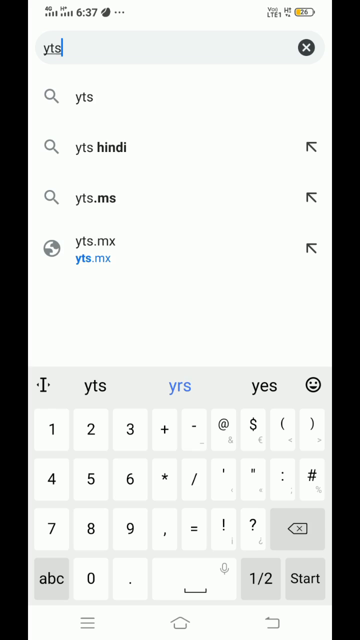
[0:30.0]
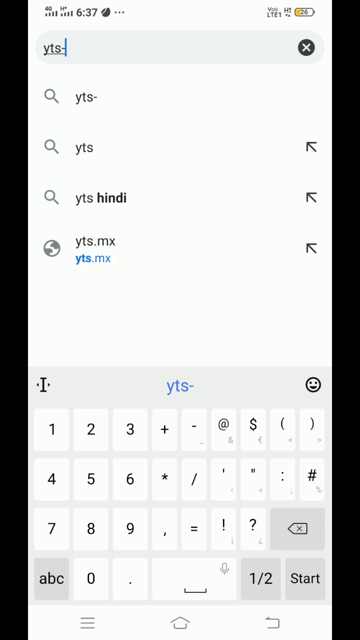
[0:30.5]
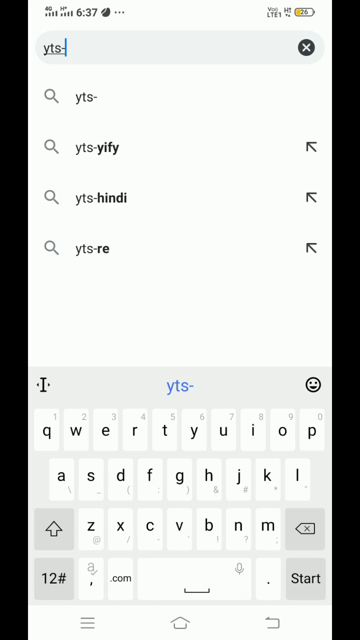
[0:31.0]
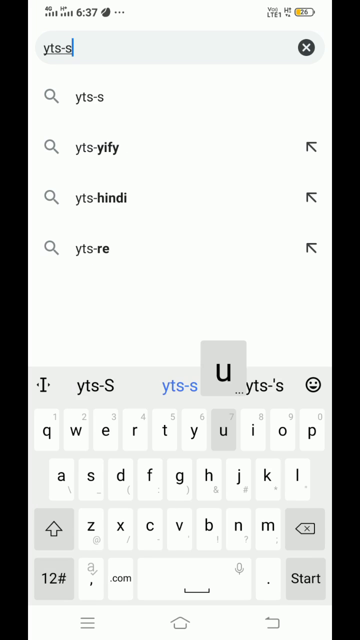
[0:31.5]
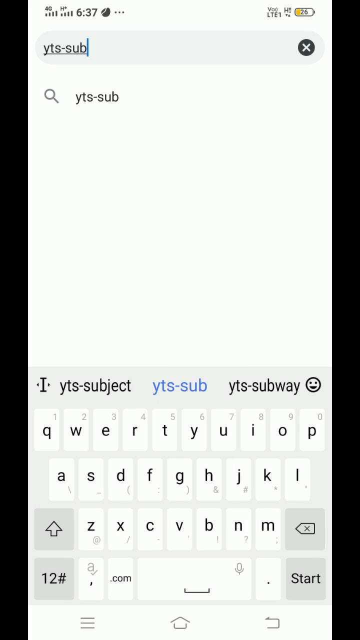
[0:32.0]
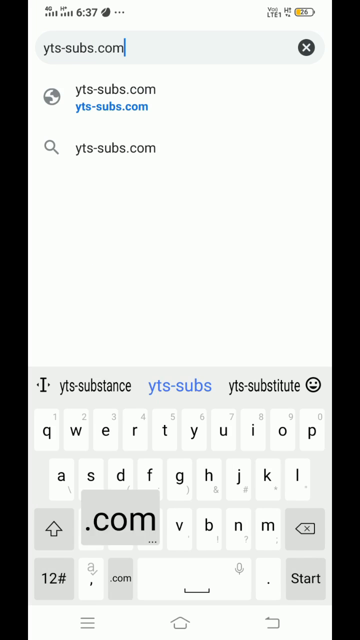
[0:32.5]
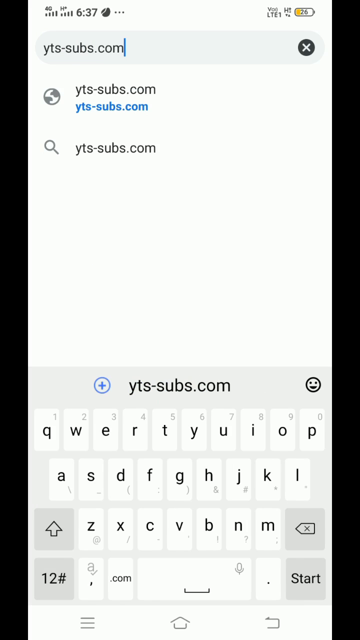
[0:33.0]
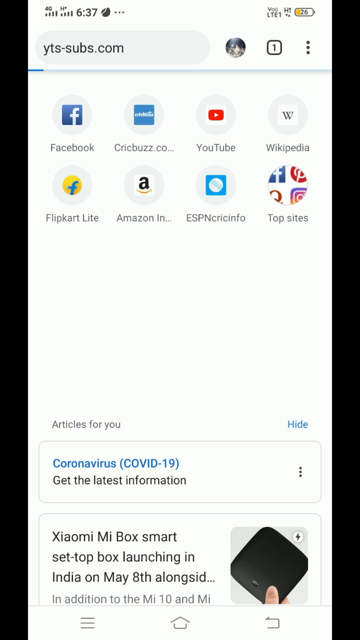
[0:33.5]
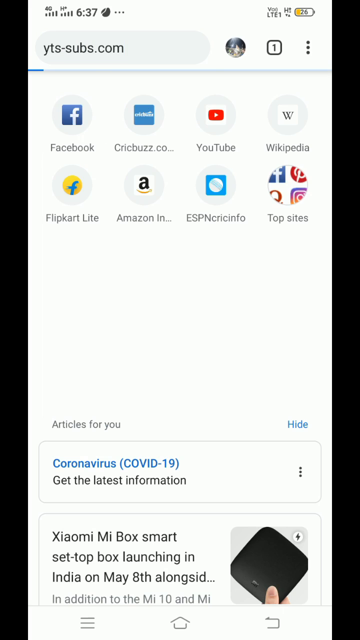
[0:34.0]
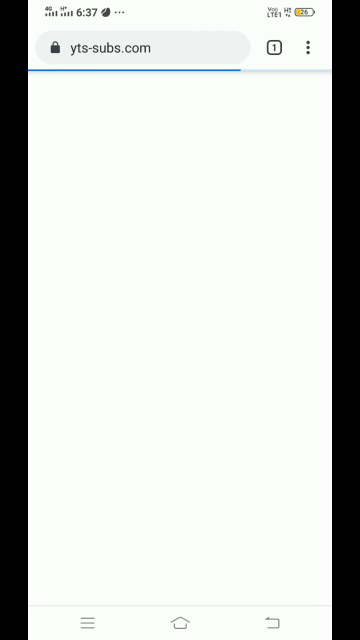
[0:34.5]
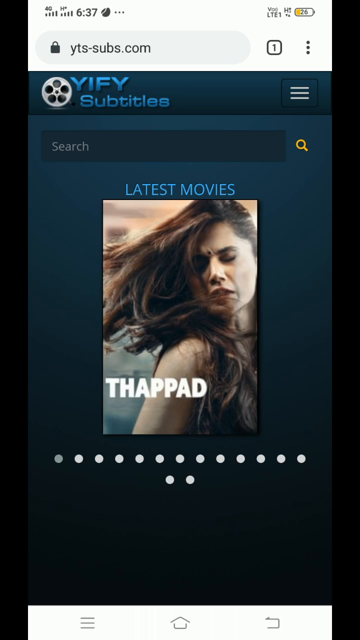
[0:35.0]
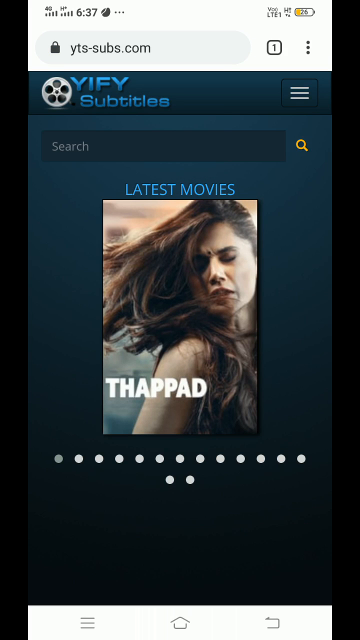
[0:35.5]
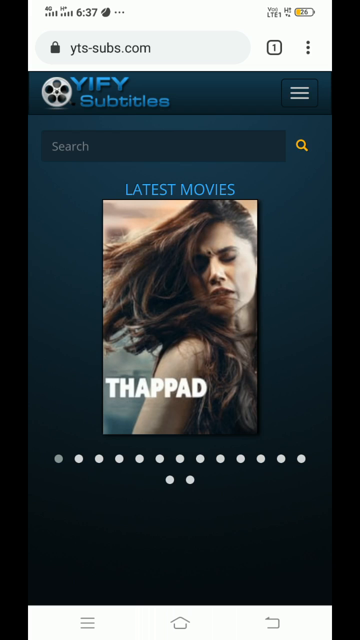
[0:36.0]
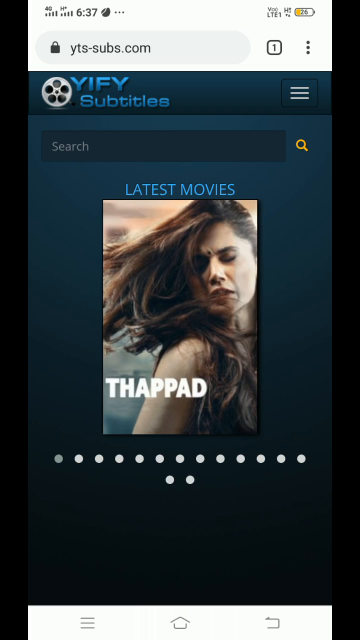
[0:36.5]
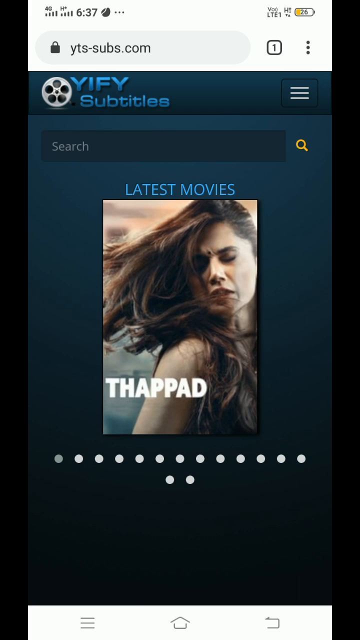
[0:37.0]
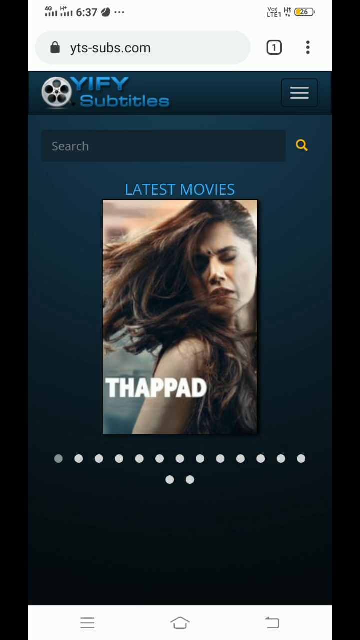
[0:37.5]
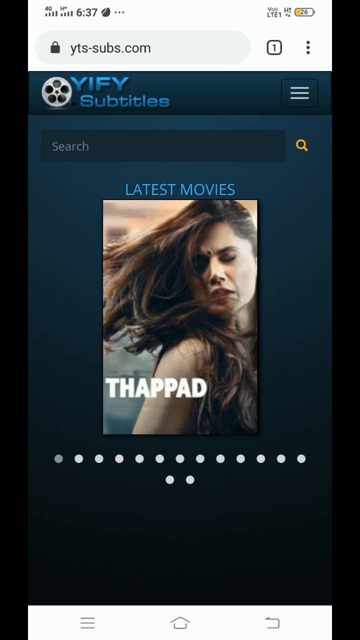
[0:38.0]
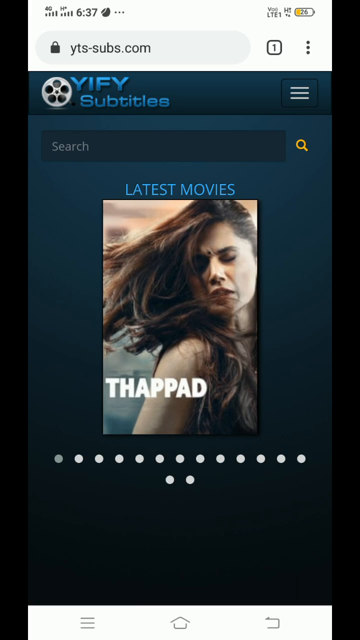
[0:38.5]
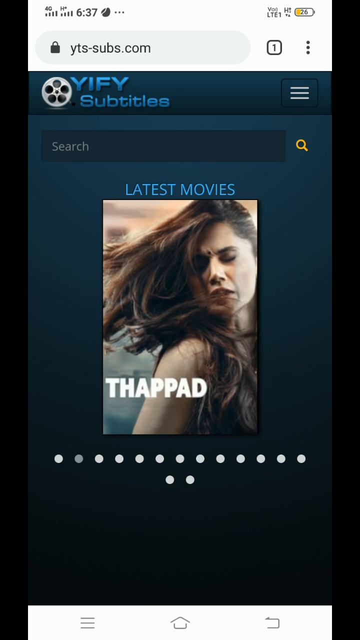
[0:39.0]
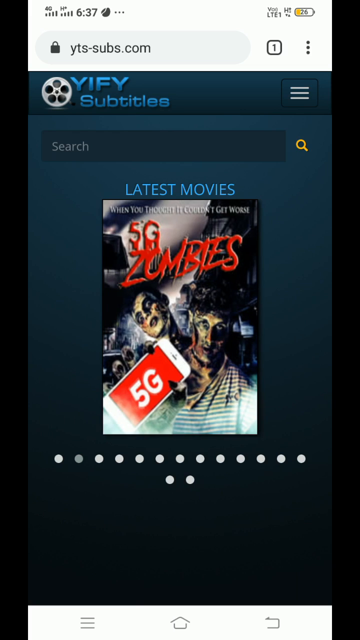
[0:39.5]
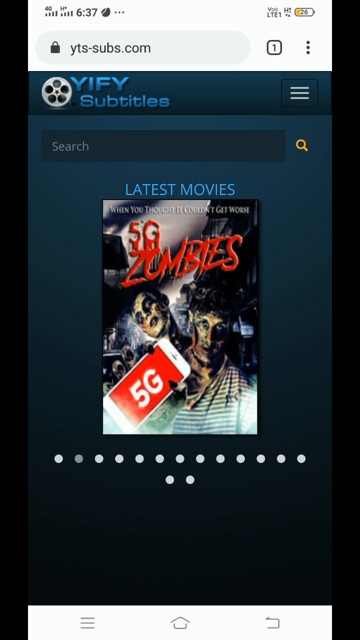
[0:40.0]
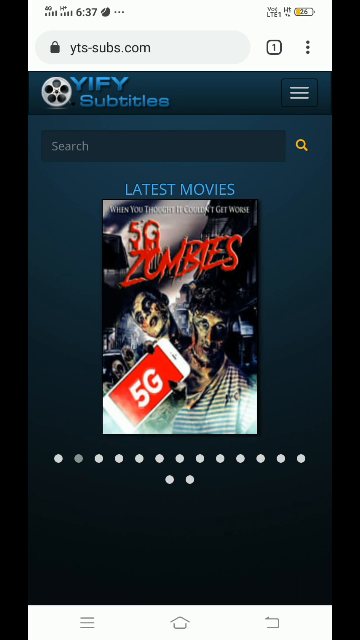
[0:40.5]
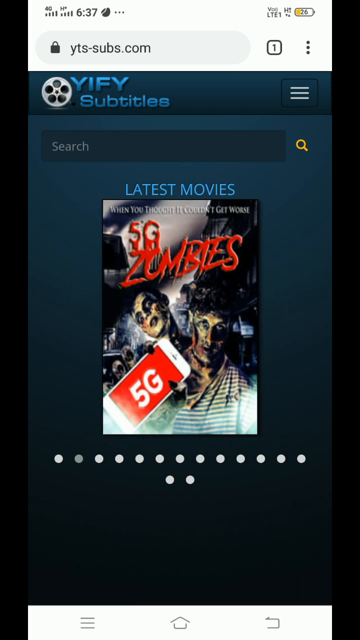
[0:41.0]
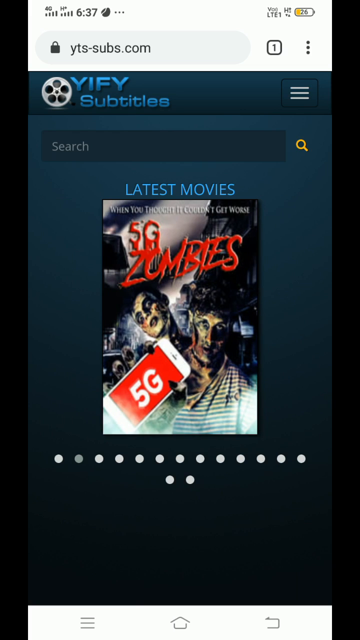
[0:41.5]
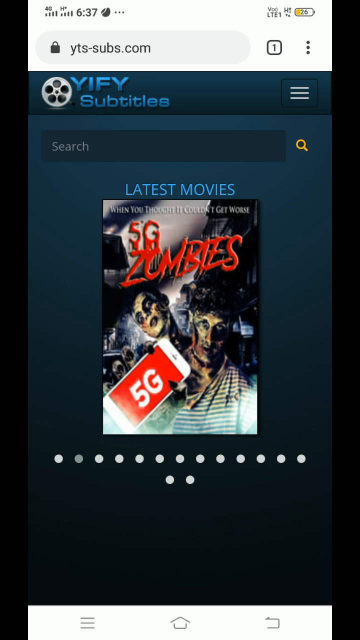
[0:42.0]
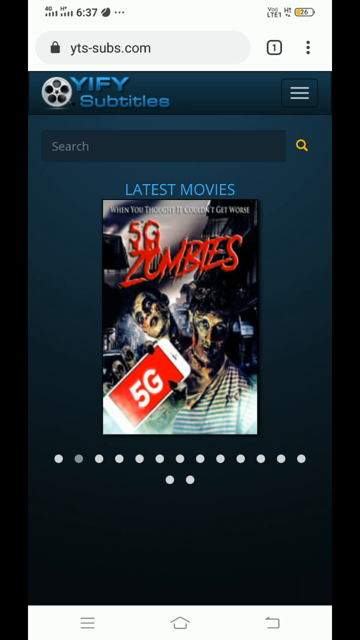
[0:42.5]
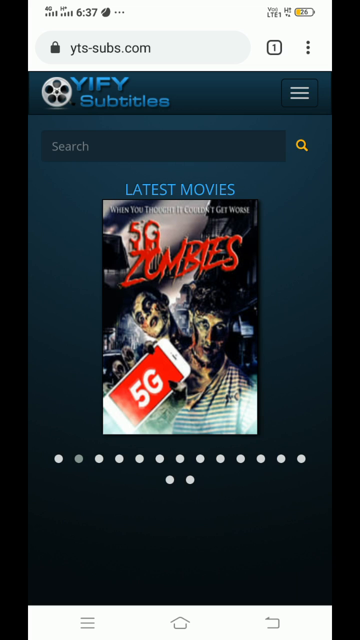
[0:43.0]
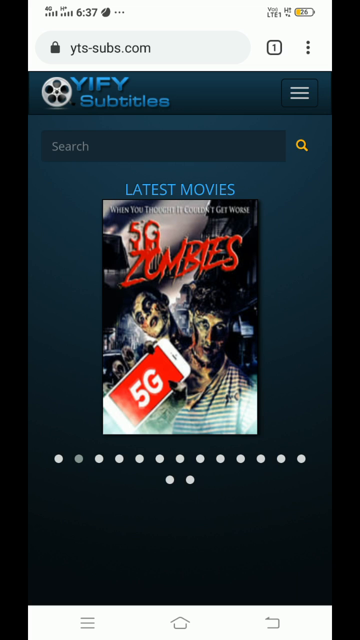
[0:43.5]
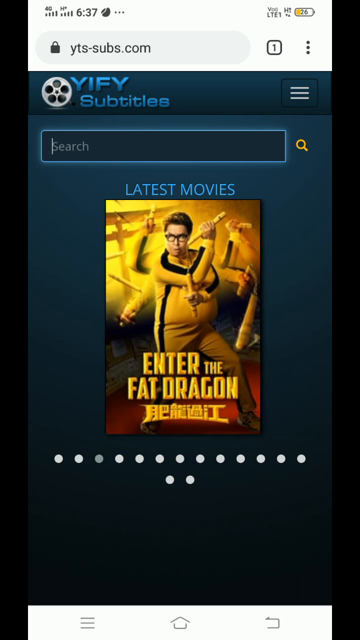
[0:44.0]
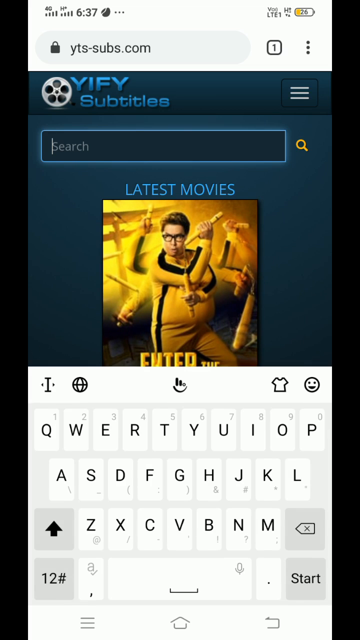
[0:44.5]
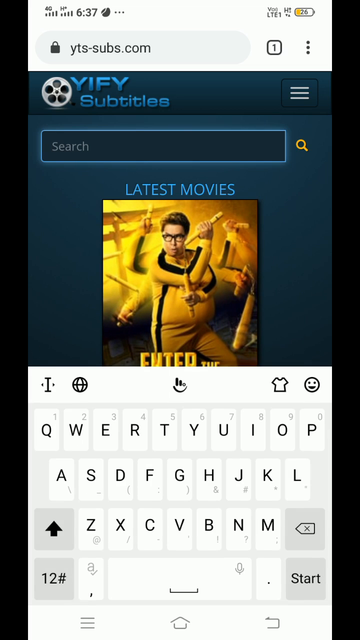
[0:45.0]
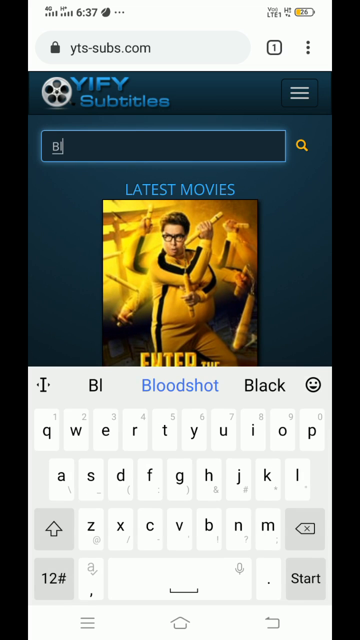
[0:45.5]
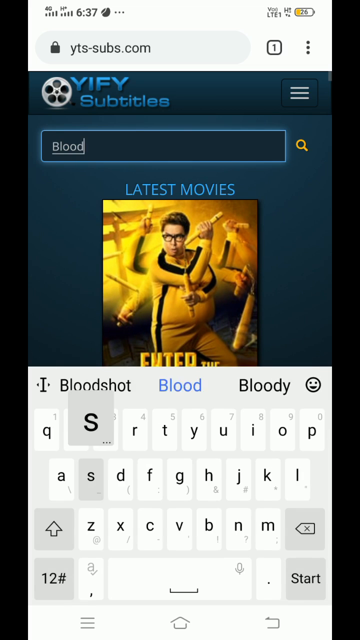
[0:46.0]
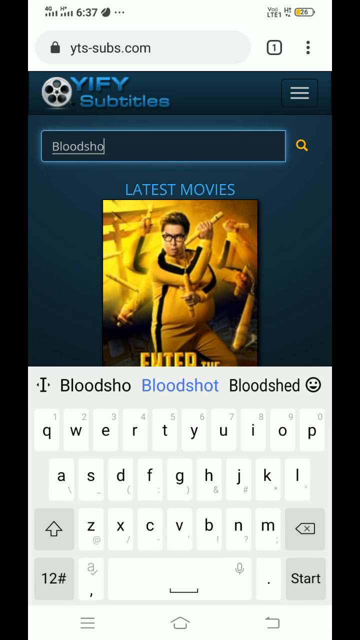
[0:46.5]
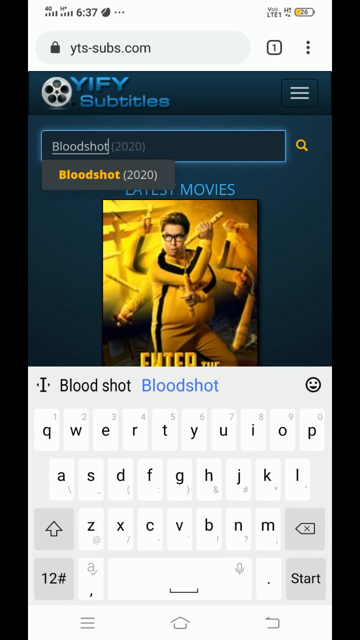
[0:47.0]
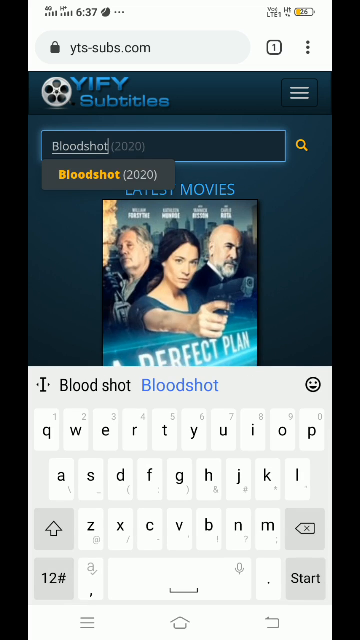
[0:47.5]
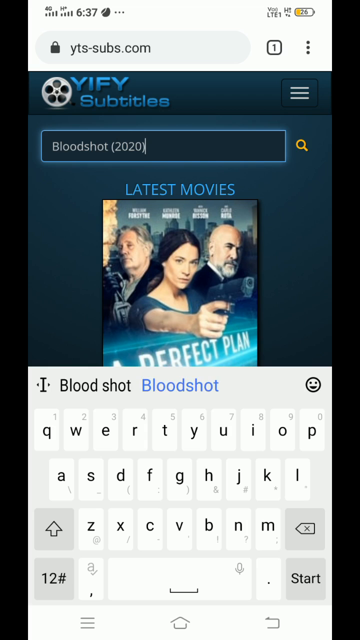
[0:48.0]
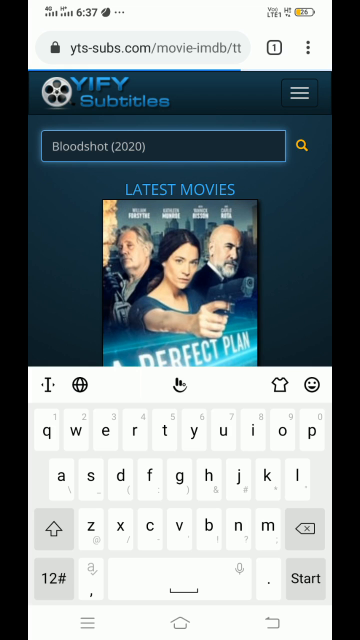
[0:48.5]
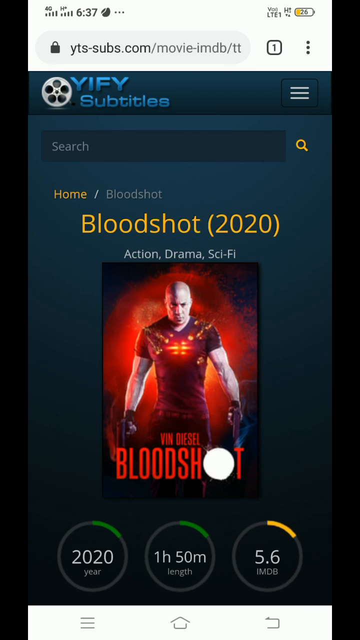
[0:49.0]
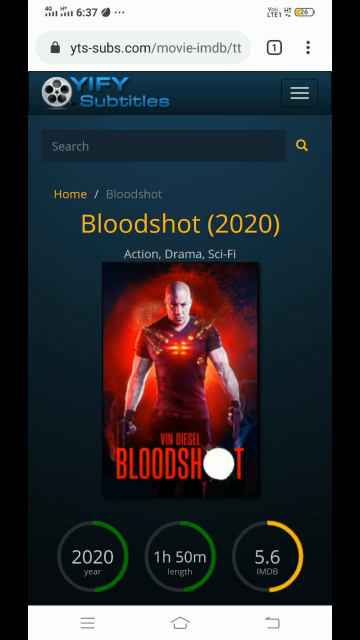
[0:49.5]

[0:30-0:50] More text is added into the grey horizontal search bar at the top of the screen, with the keyboard keys at the bottom flashing as they are pressed. The entered text generates a suggestion underneath of yts-subs.com, and that website address begins to load. The keyboard disappears off the bottom of the screen and two horizontal rows of four columns of icons reappear, while a grey progress bar at the top of the screen under the search field turns blue from left to right to show that the site is loading. The horizontal grey search bar remains at the top, but underneath it is now a website titled Yiffy Subtitles, with an old film reel seen side on as the logo next to the text at the top. Below is a horizontal search bar, and below that wording that says 'latest movies'. Beneath this is a 10 by 8 portrait image of a woman to the right of the shot leaning back so she faces the viewer, her hair flowing in the background behind her, with THAPPAD written in white capital letters at the bottom of the image. This central image slides left off the screen and is replaced by a new image sliding in from the right, called 5G Zombies, showing zombies holding a phone with 5G written on it; the 5G Zombies logo and phone graphics are red. Another movie swipes in from the right: a predominantly yellow poster showing a fat man in Bruce Lee's famous yellow tracksuit, titled Enter the Fat Dragon. A white keypad with black letters then takes over the bottom half of the screen, and the cursor flashes in the website's search bar. The keypad spells out 'bloodshot', which appears letter by letter in the search bar, immediately bringing up a suggestion underneath of Bloodshot (2020). This is selected, and the screen for Bloodshot (2020) loads, in the same format with the title and a 10 by 8 box underneath showing the film's poster with Vin Diesel and the title Bloodshot. Three circles at the bottom of the screen give statistics on the film: the first says '2020 year', the second '1 hour 50m length', and the last '5.6 IMDB'. The outlines of these grey circles start to be coloured in from the top, going round clockwise, the first two in green and the last in yellow, with the green going further around than the yellow.